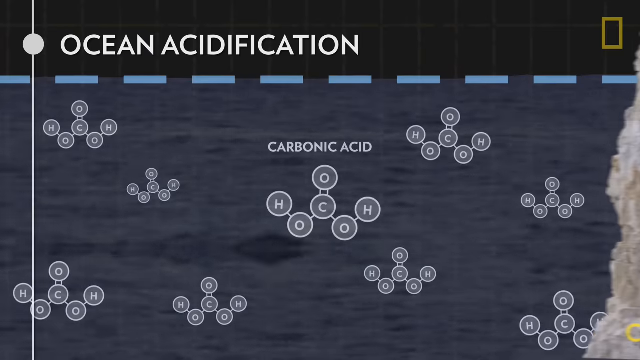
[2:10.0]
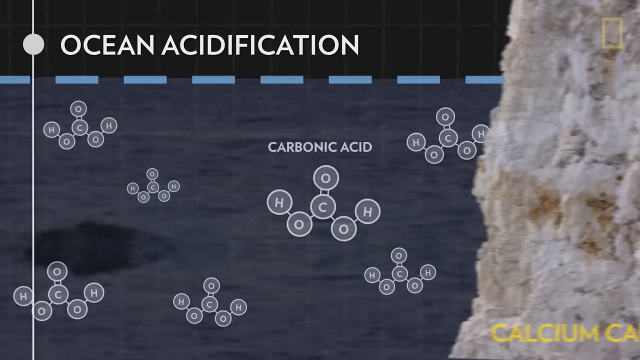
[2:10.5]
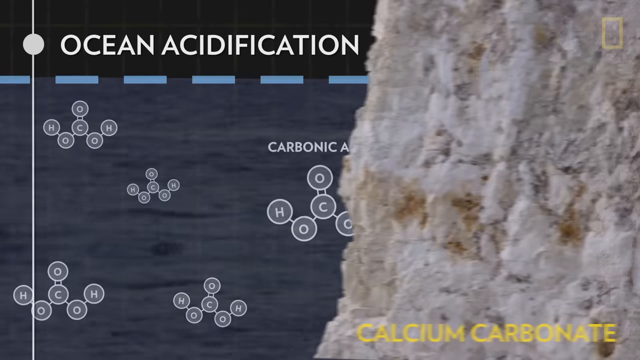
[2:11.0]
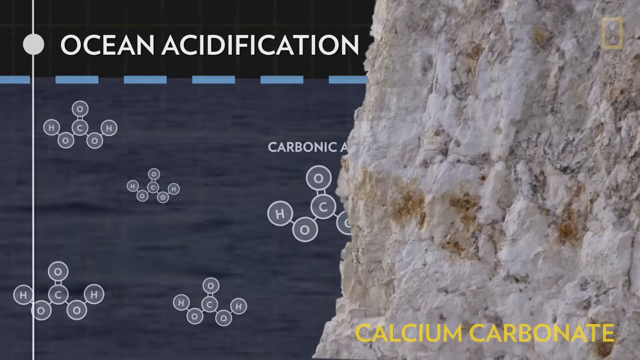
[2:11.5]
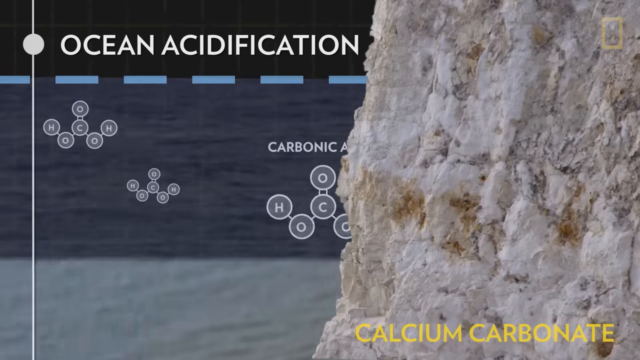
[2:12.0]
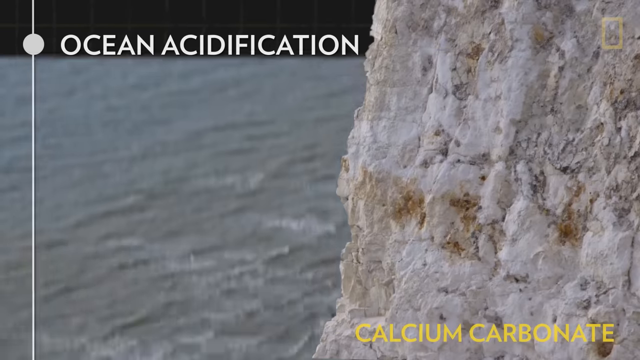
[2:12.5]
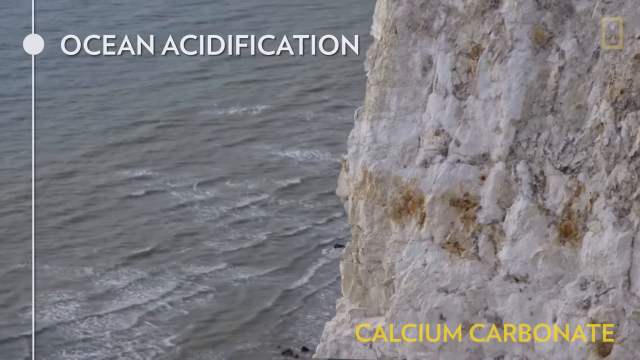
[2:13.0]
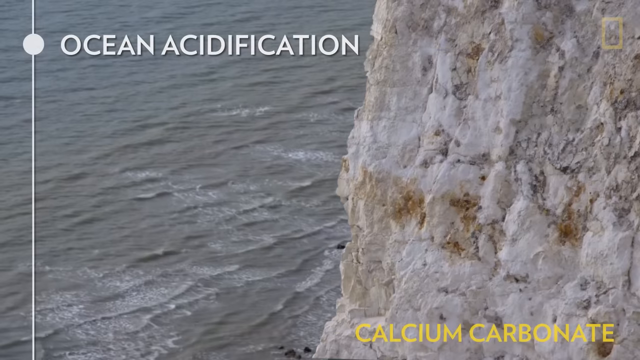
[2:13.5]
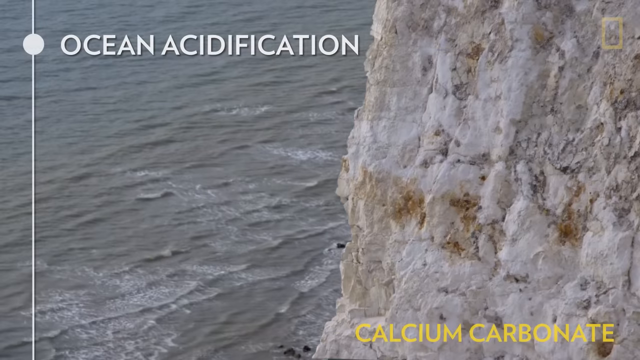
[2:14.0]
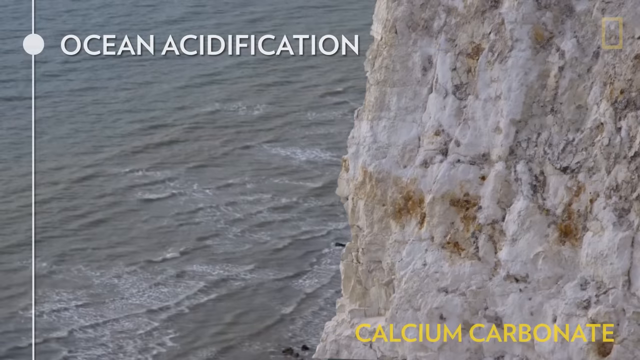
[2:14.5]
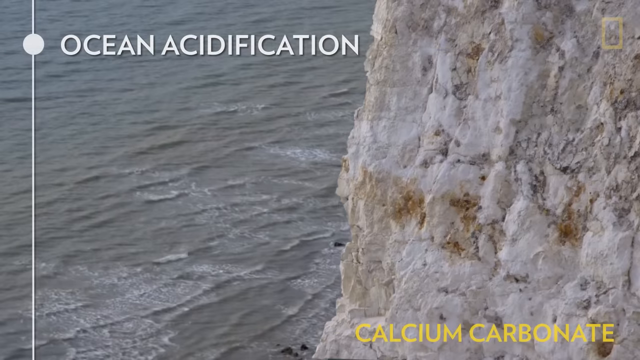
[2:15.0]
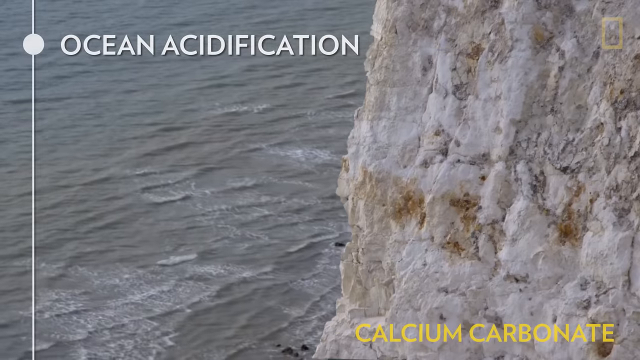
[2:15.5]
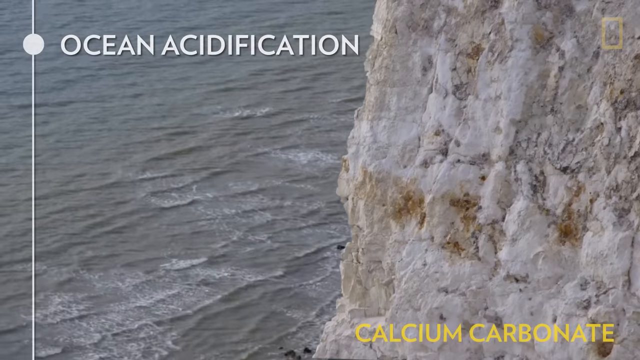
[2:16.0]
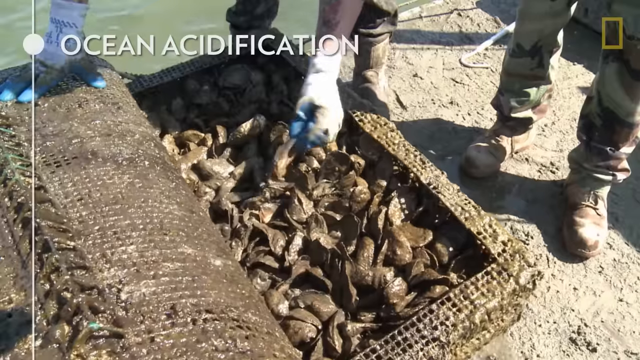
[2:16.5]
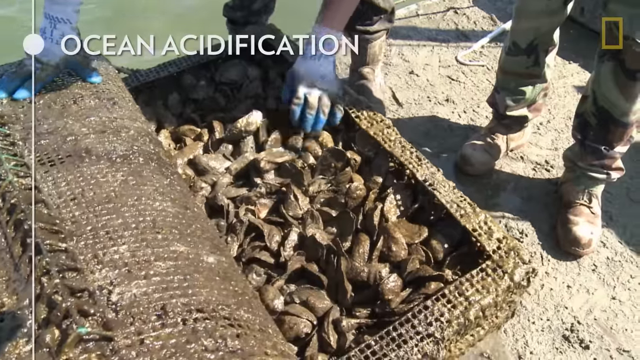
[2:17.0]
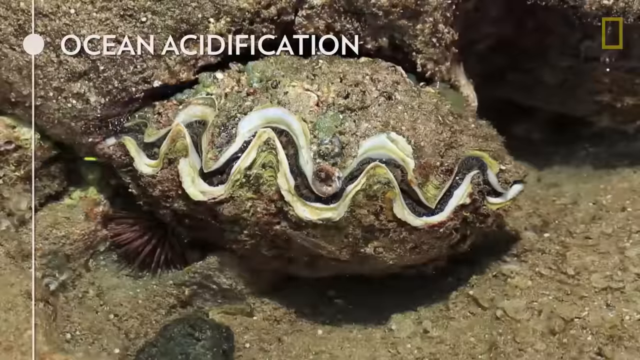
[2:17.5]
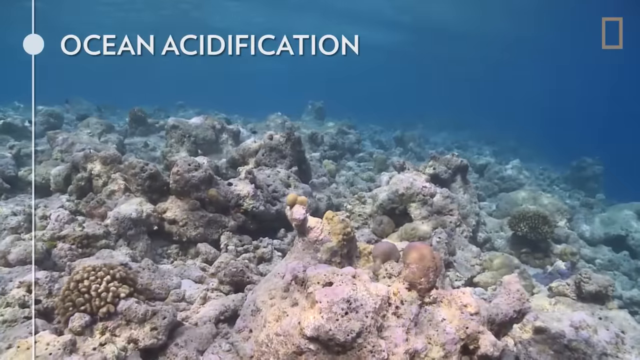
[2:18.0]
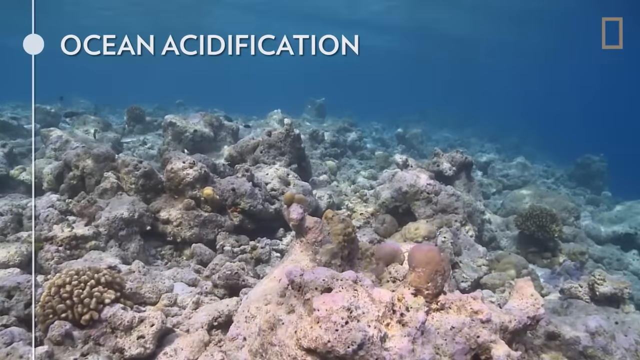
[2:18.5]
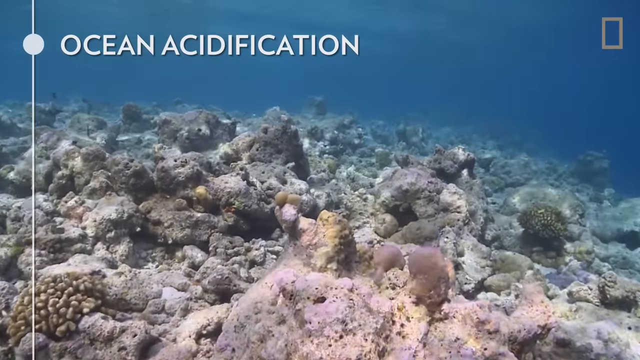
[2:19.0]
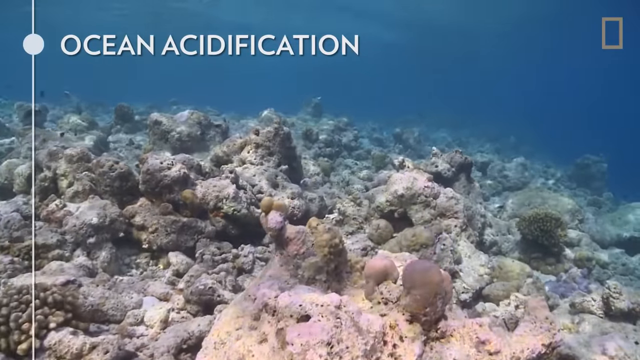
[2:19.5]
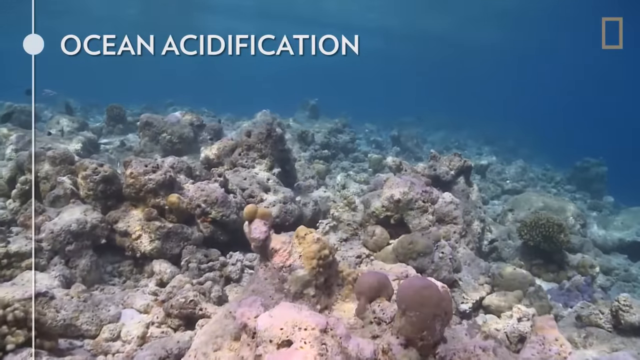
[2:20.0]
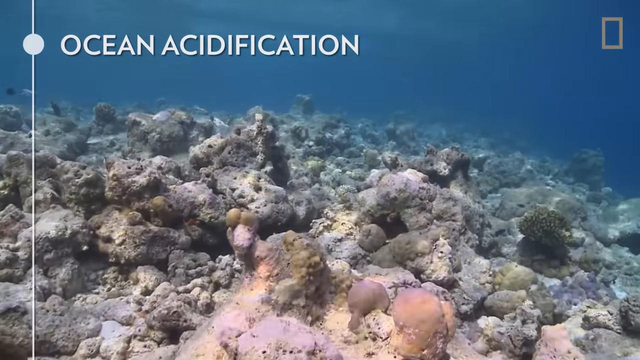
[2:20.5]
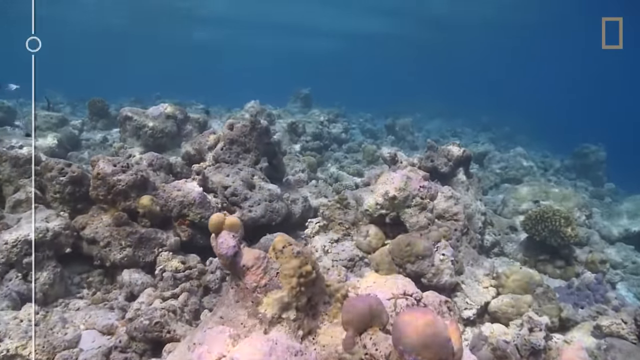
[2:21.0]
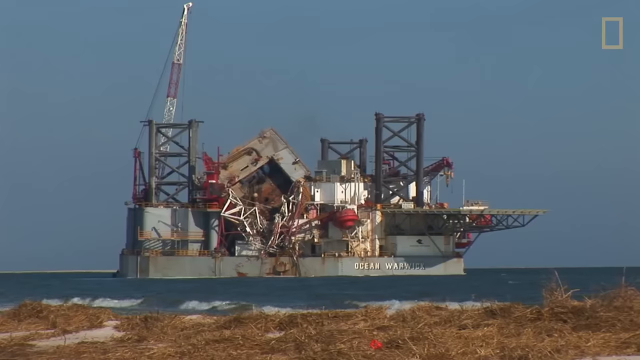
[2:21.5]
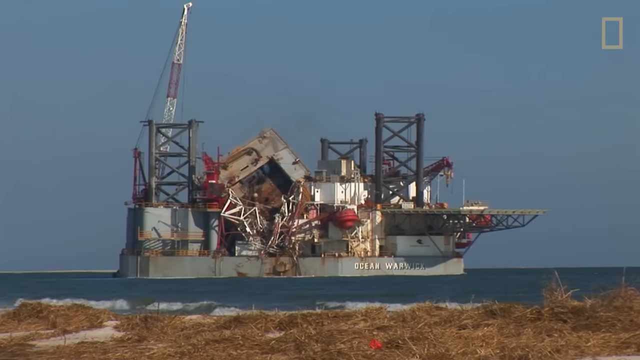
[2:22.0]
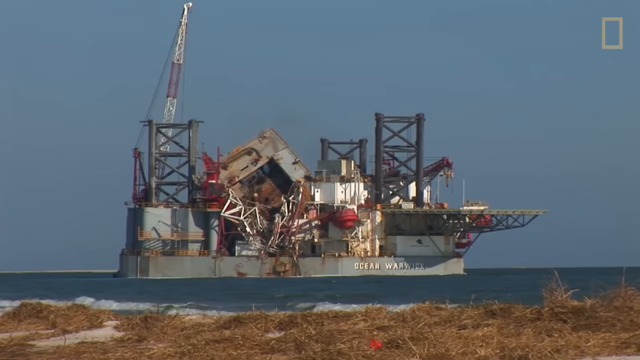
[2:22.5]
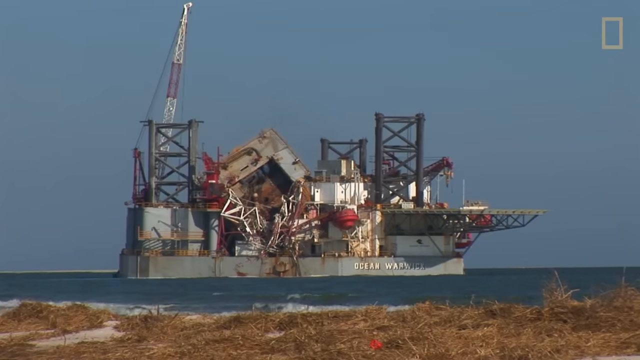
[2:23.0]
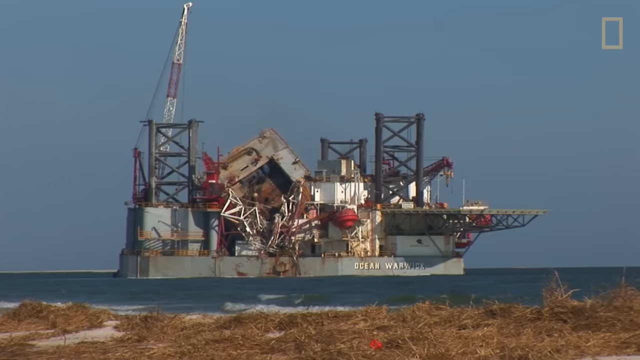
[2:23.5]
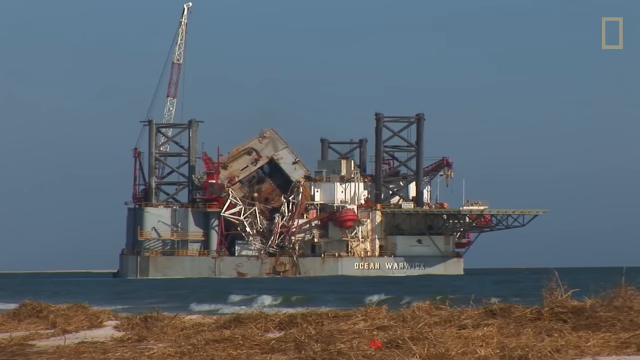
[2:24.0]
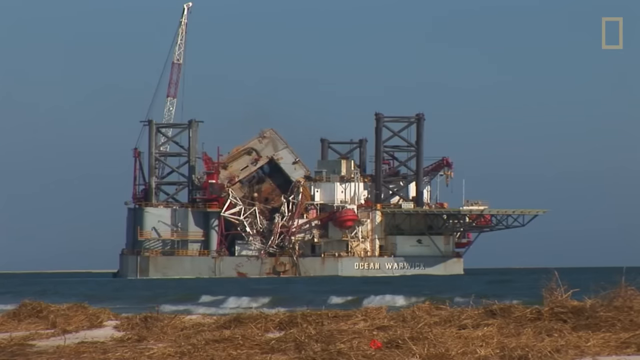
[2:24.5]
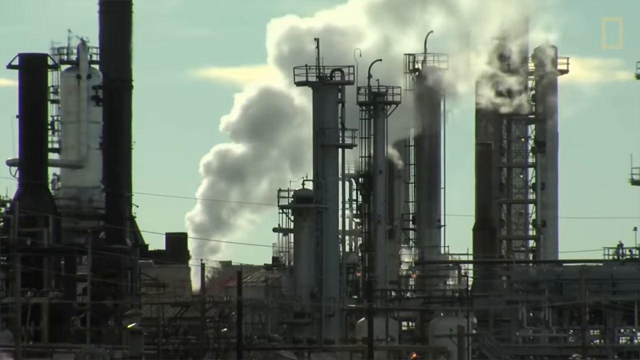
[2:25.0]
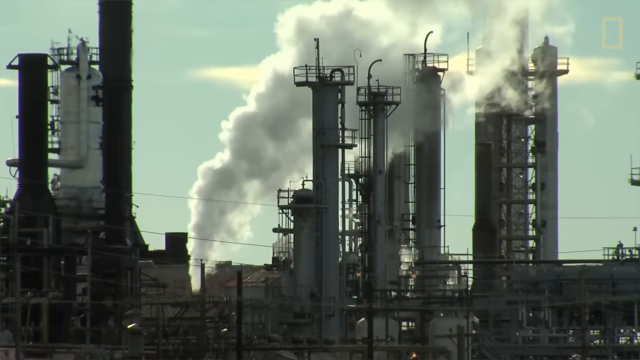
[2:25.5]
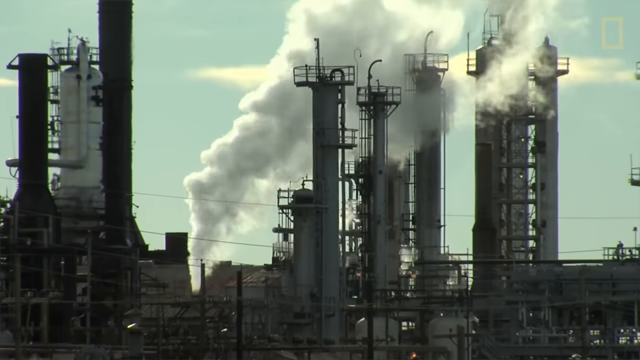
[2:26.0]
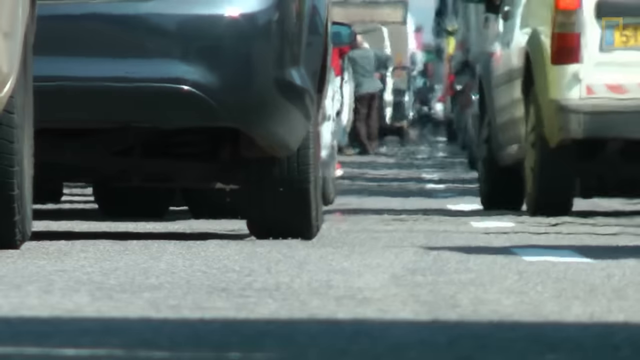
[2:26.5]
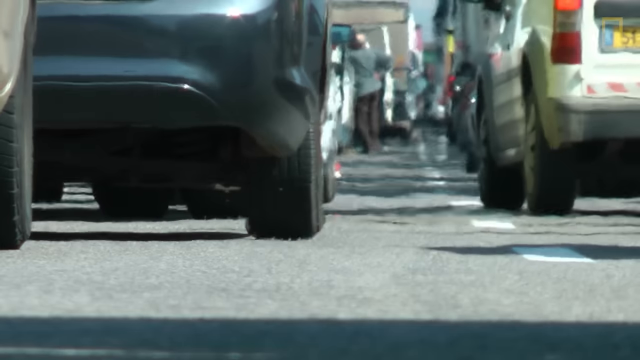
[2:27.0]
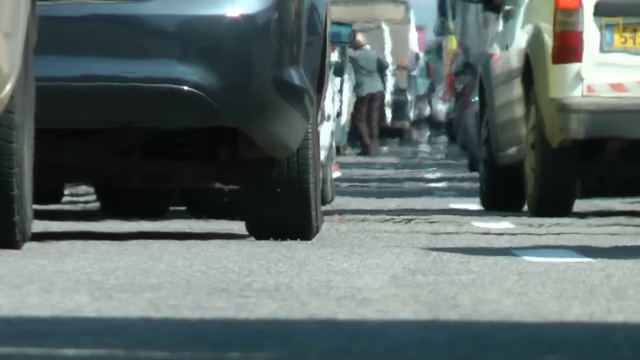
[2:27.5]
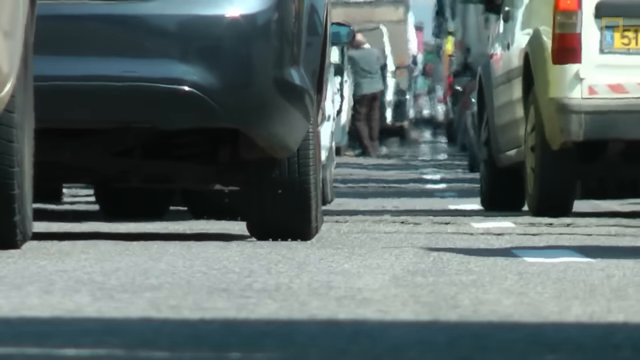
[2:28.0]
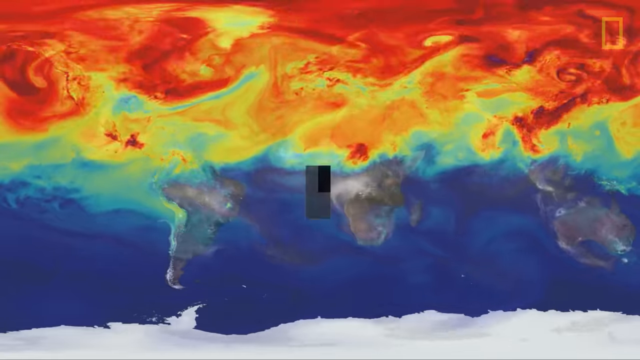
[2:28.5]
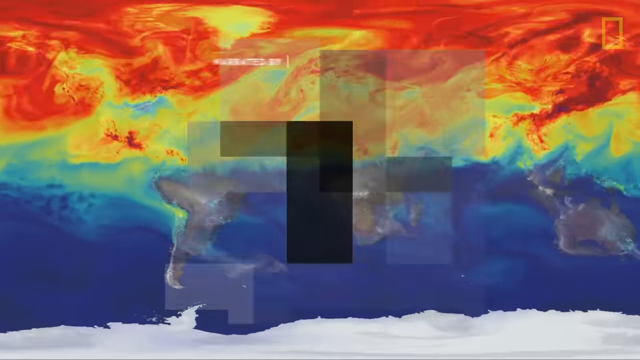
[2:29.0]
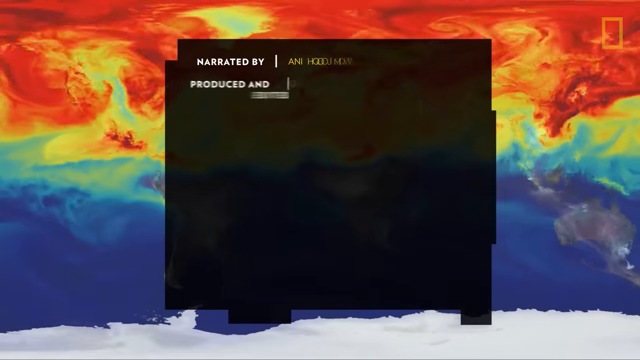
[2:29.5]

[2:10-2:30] White capital letters in the upper left read "ocean acidification." The background video shows a white-brown rock cliff on the right, and on the left what is presumably ocean water, blue-gray with little waves. The video then moves through different clips. The next is apparently underwater, with medium to dark blue water in the top half and rocks and seashells in the bottom half, with light shining off the rocks. Next comes what looks like an oil rig in the middle of an ocean. Then a factory appears in silhouette, all blacked out, possibly due to the height of the sun, with smoke billowing from the top of its stacks into the daytime sky.